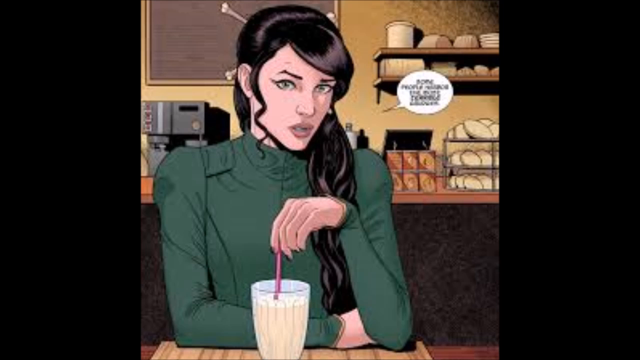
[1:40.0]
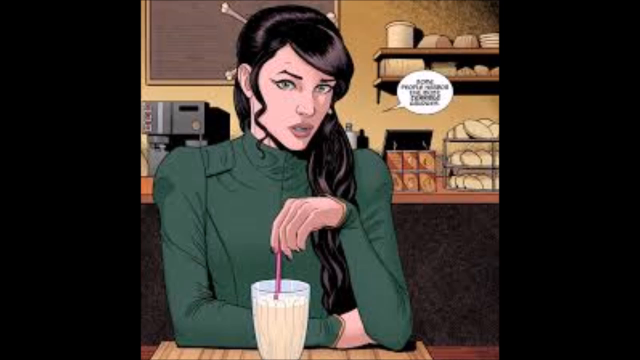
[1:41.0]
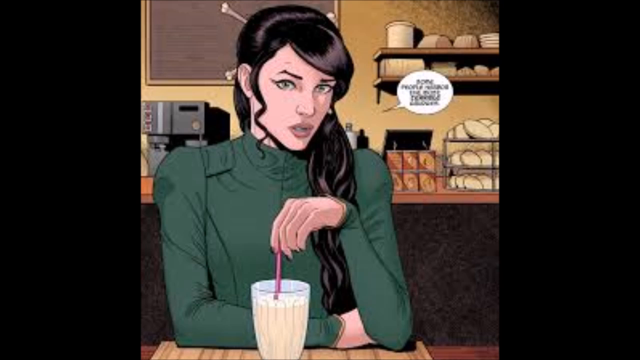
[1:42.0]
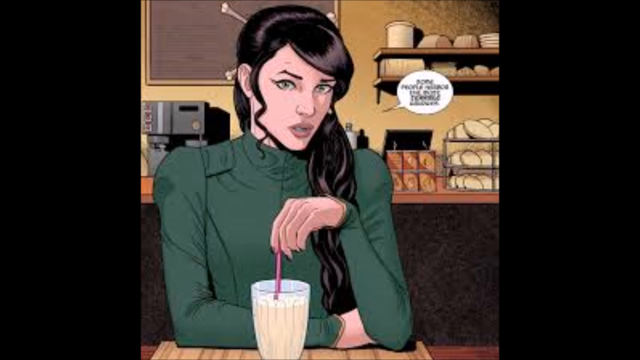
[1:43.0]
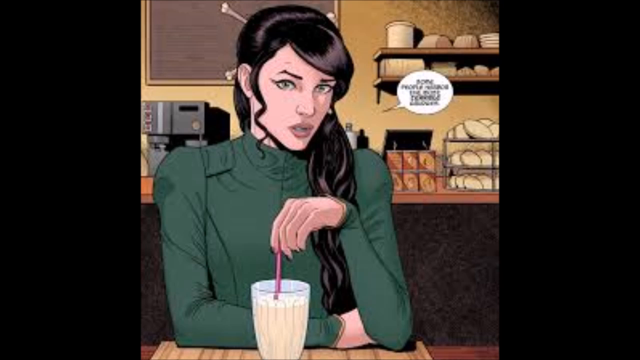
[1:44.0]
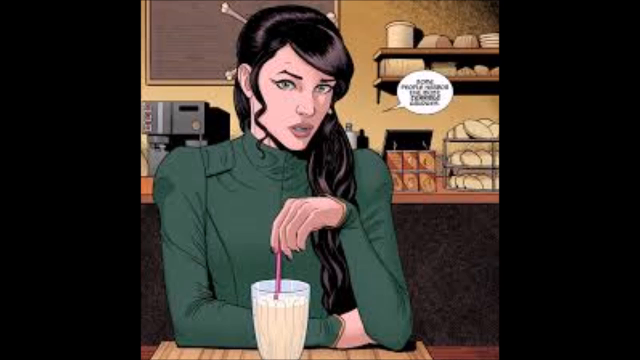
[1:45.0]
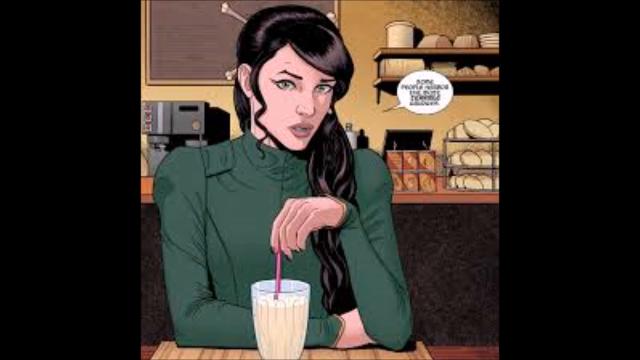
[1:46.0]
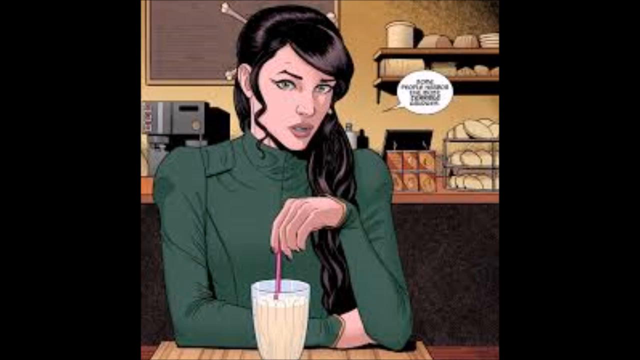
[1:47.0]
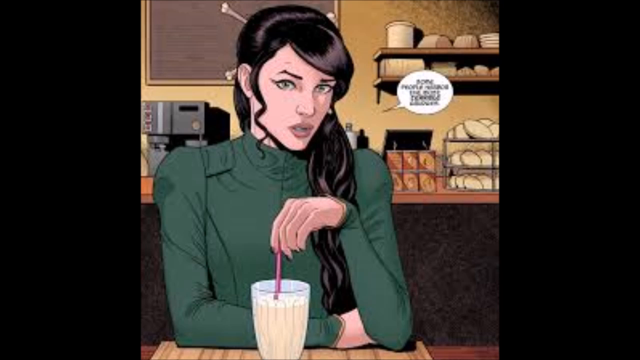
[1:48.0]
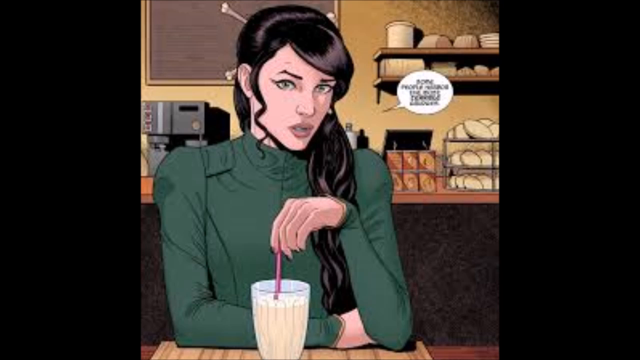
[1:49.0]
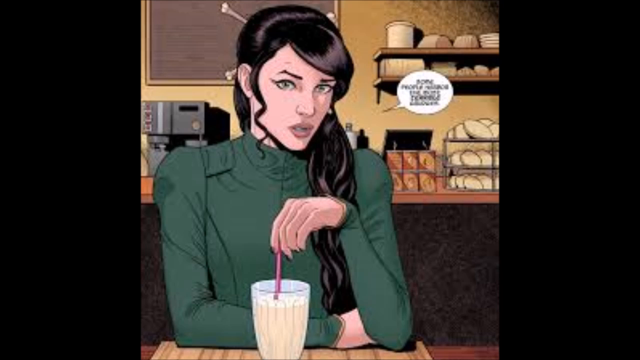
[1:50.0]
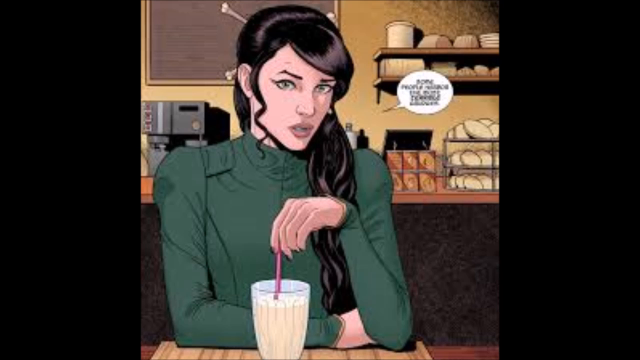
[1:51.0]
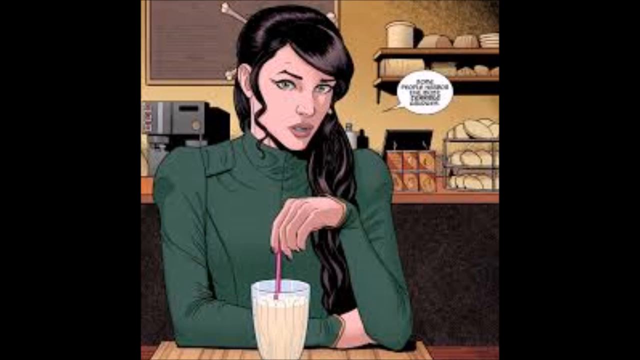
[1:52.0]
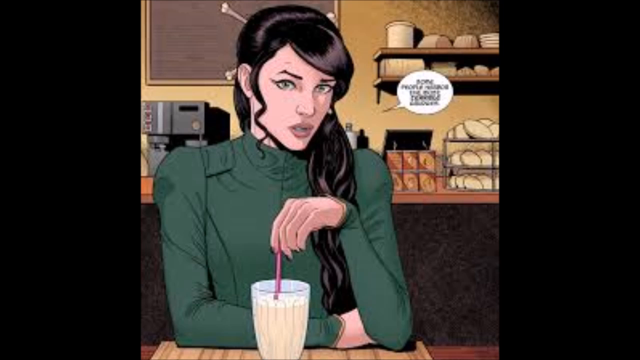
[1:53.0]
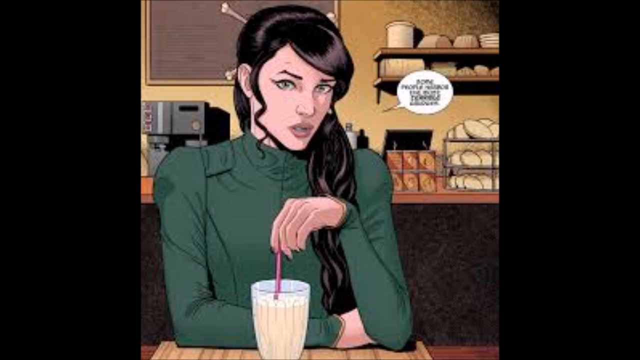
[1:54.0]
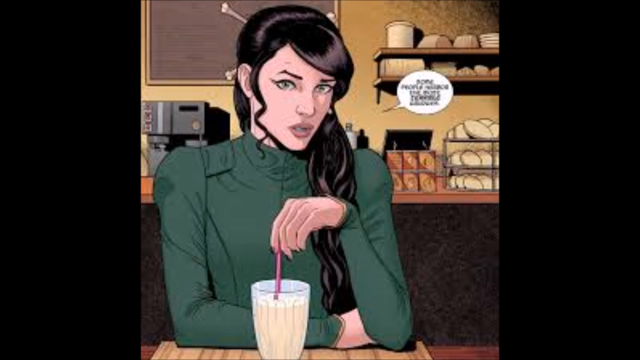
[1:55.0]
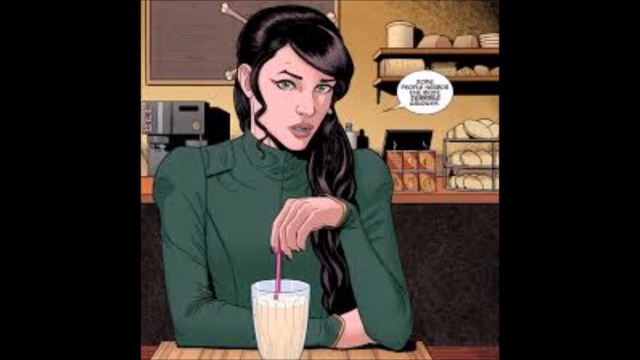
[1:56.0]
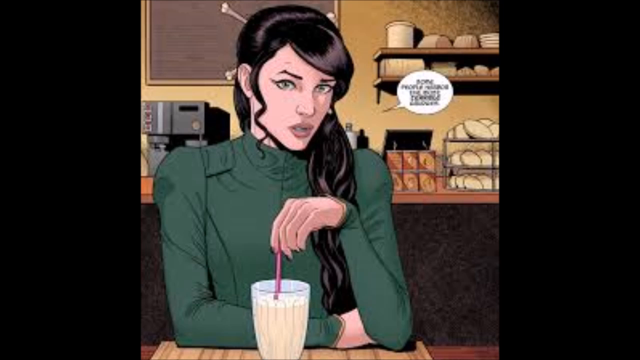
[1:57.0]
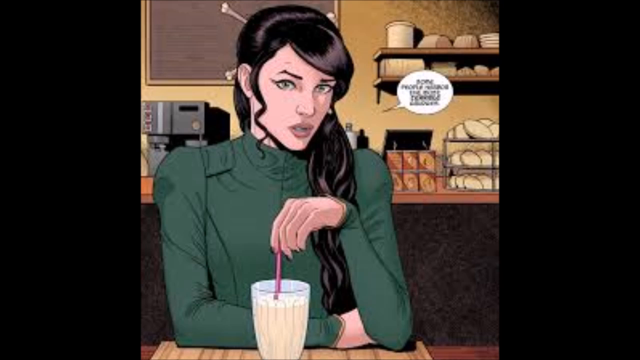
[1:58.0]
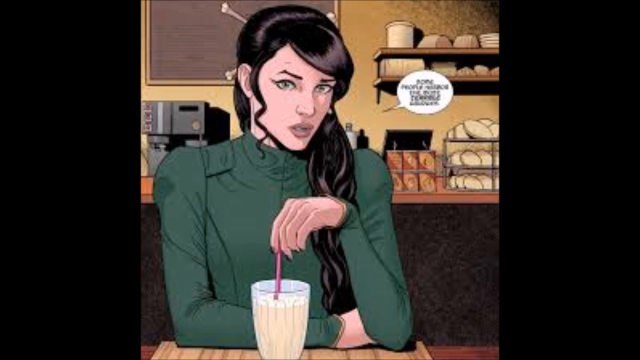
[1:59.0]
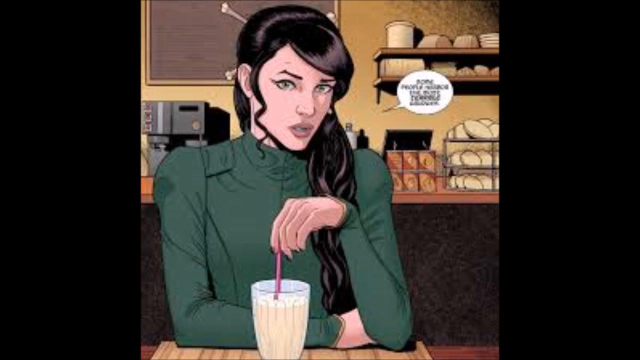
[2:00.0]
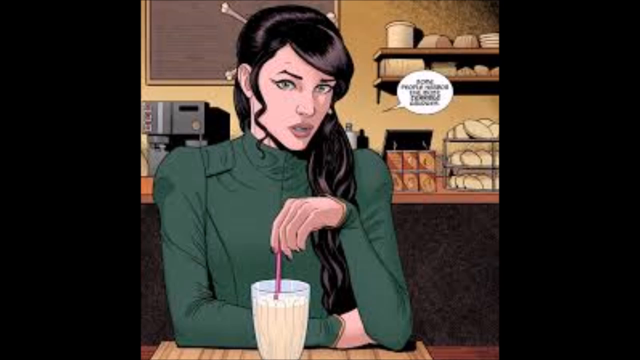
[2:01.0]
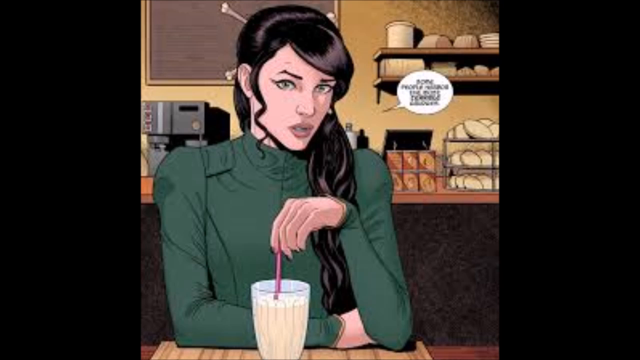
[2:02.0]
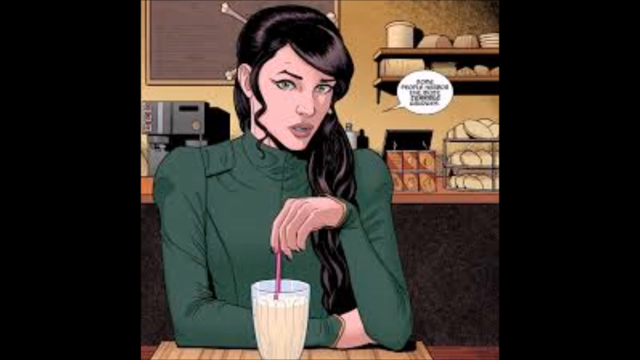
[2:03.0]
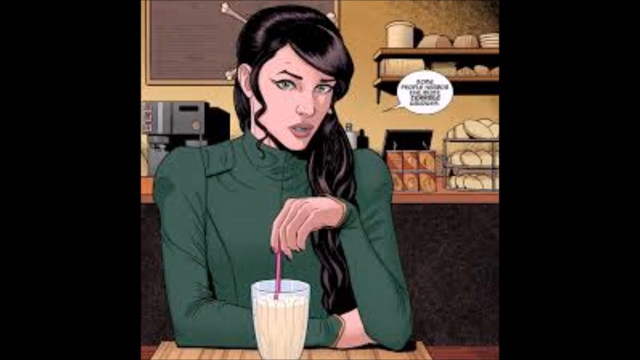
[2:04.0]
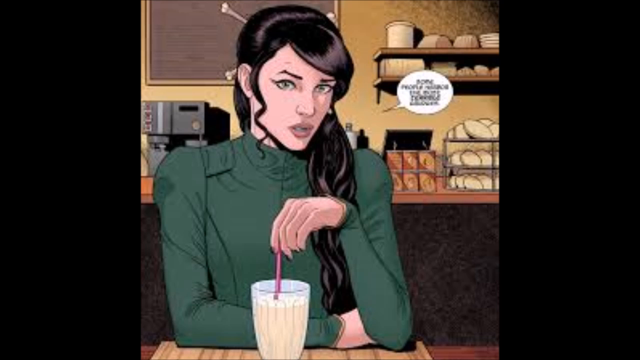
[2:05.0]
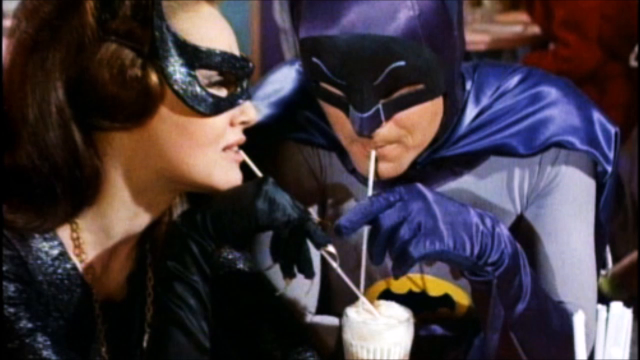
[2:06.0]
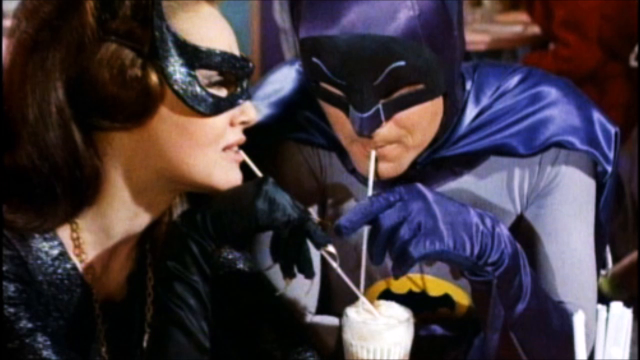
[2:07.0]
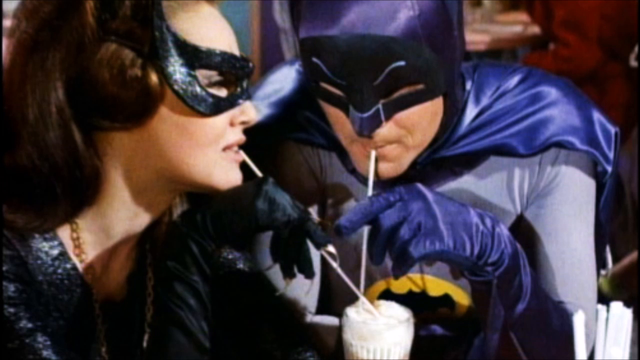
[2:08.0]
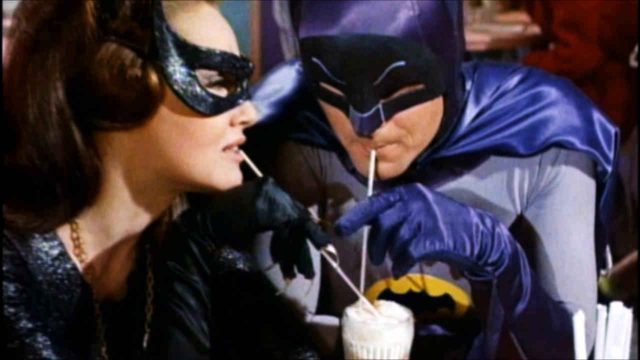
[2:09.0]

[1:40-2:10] The woman in the green t-shirt has her eyes focused on an area across the room, staring at something. Text on the side, not clearly visible, reads "Some people are lucky." The next scene shows a couple also sharing a milkshake. They wear a hat and Marvel costumes in grey, navy and purple, black masks covering only their eyes, and navy gloves. As the man sips the milkshake, the woman stares at him. They are white. The woman is seated while the man bends near her, and they seem to be around their 40s.